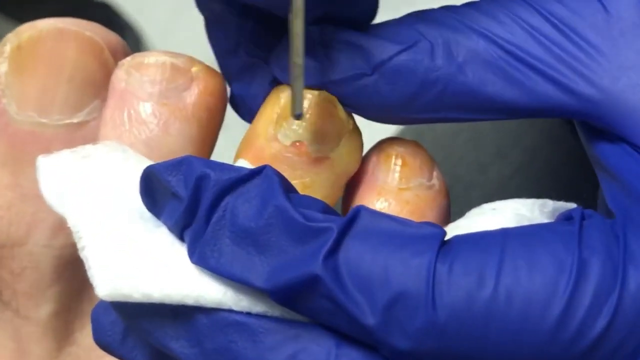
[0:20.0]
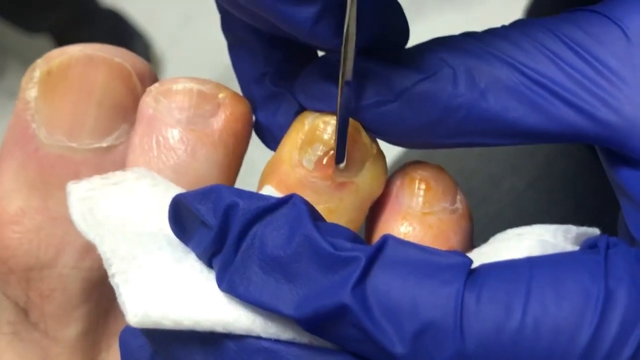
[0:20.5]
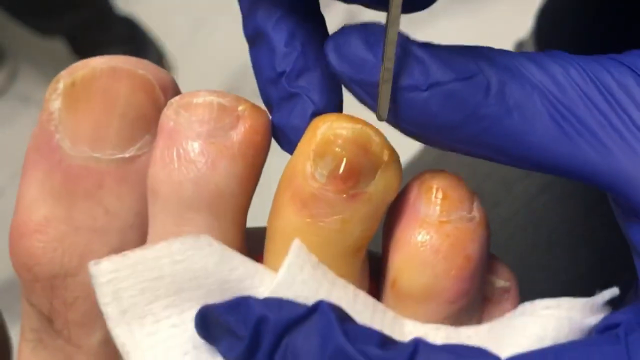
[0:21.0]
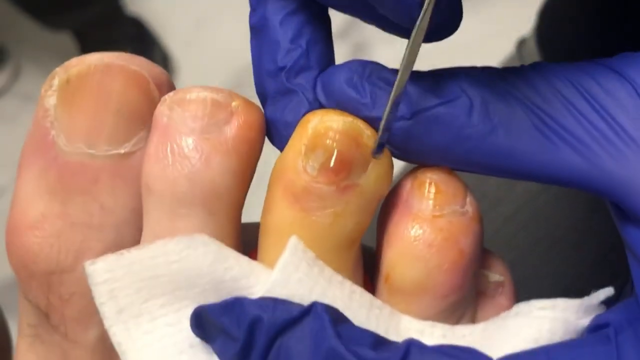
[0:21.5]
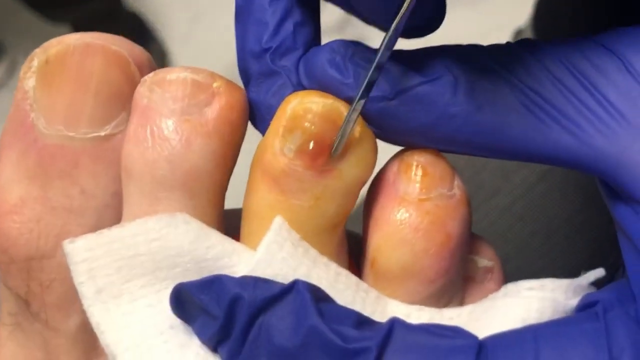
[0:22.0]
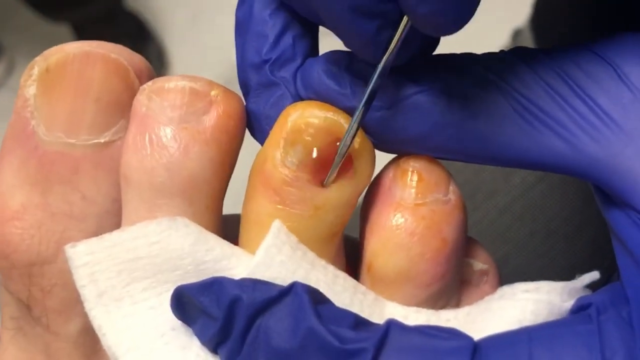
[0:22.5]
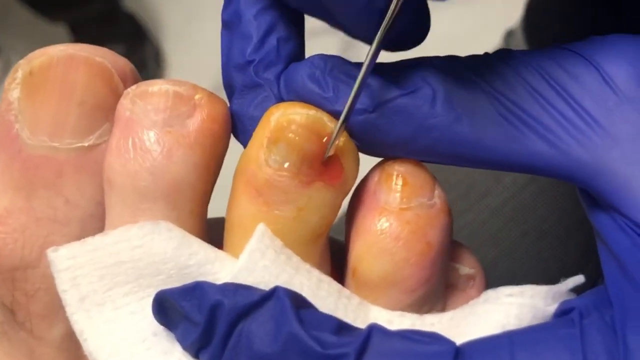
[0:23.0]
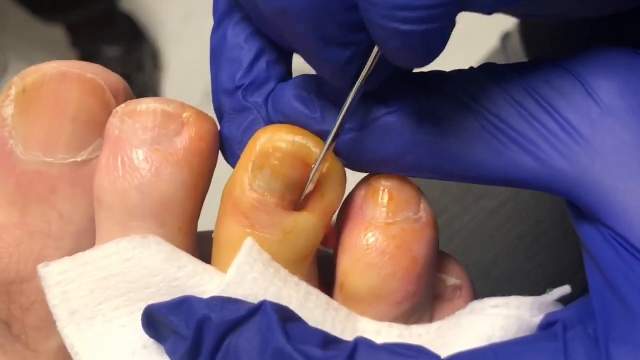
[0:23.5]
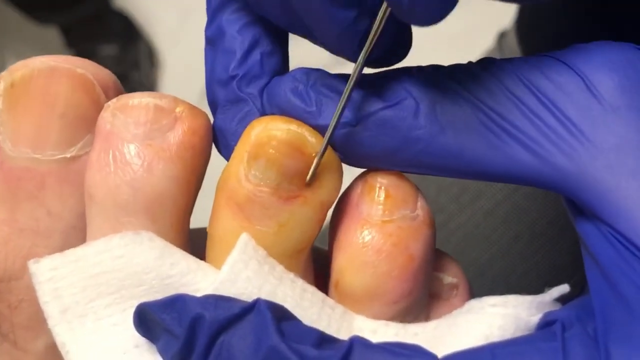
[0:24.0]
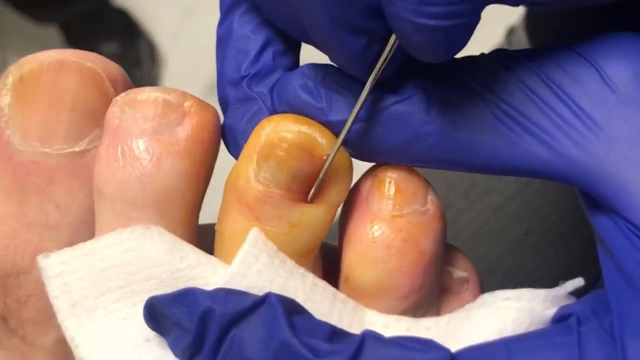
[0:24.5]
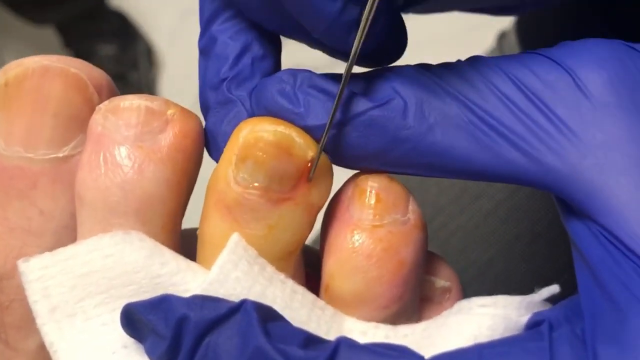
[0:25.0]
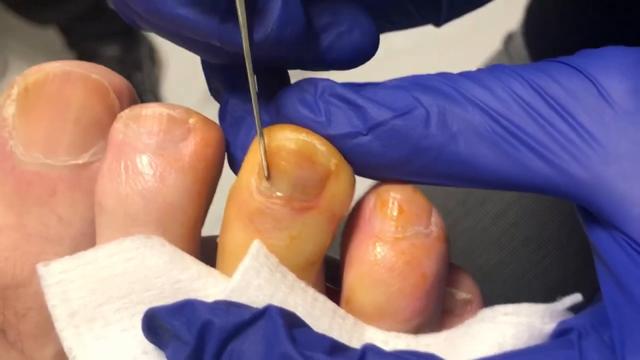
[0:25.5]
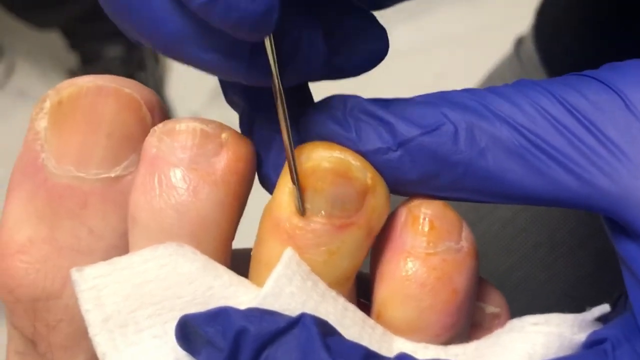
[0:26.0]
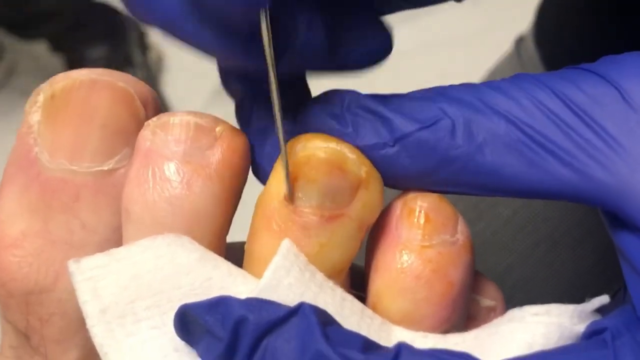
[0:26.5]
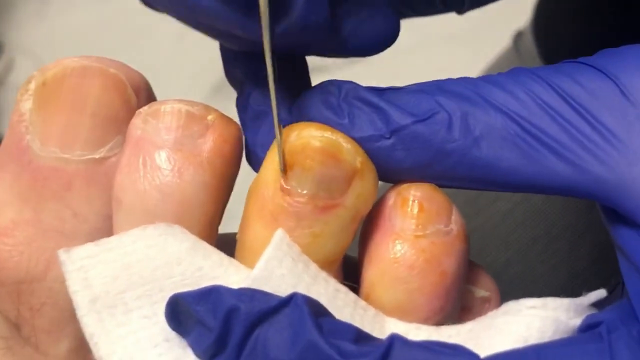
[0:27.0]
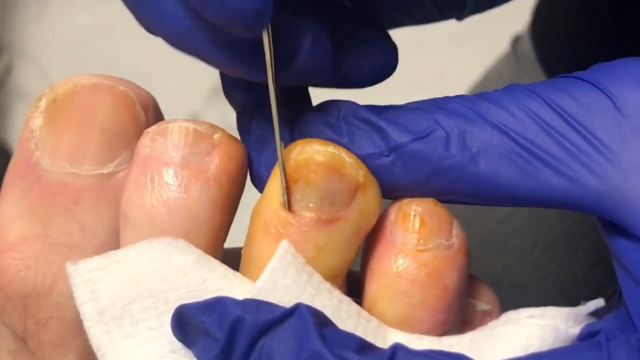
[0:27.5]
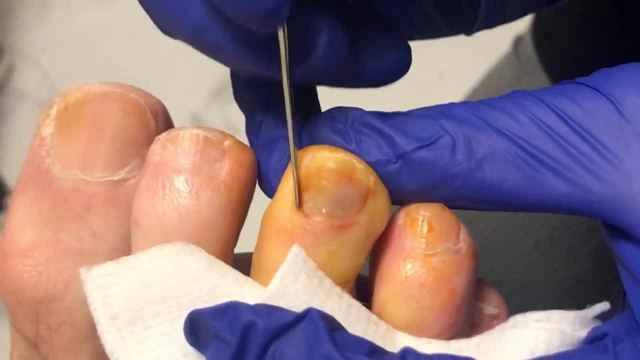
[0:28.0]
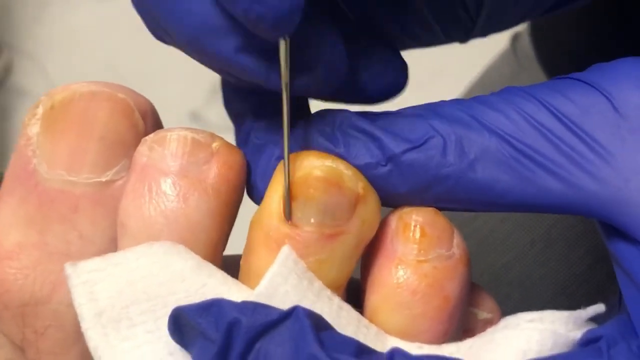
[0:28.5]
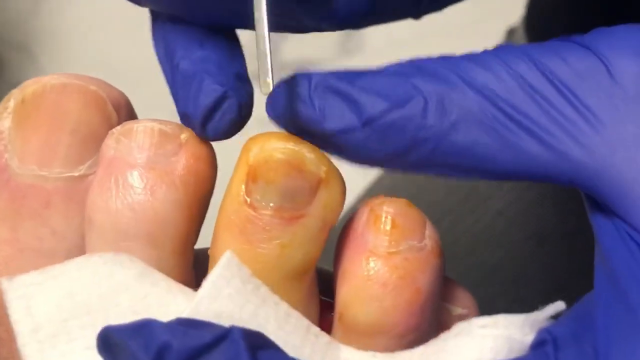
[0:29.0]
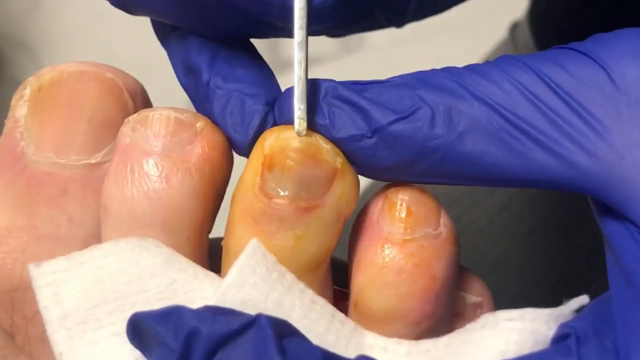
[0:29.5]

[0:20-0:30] The very close-up view of a female's toes continues as the gloved person works on the middle toe, using the metal object to push the cuticle down. As they push, a clear liquid with a red tint comes out, and more of it emerges as they keep pushing. They work not only the bottom cuticle but also along the sides, then place the object at the top of the toenail, though it doesn't look like they push there. They hold a piece of gauze in their hand that covers the bottom of the foot, so only the toenails up to the top are visible.